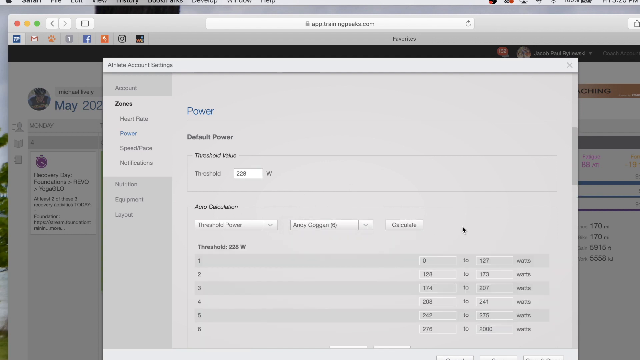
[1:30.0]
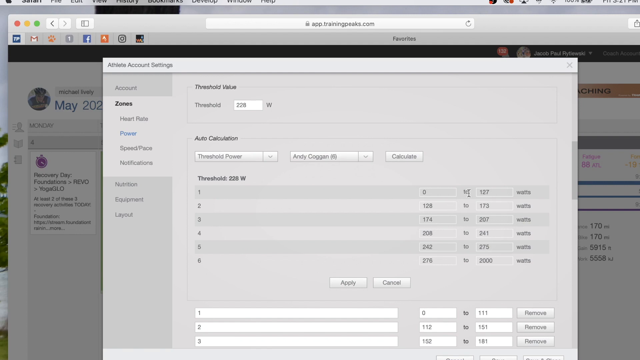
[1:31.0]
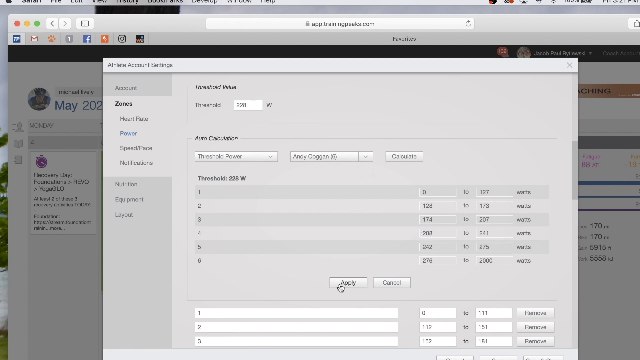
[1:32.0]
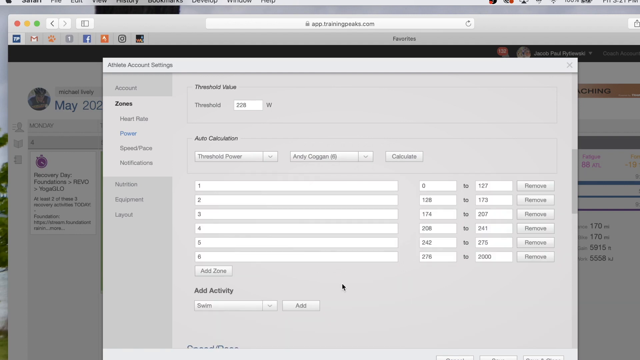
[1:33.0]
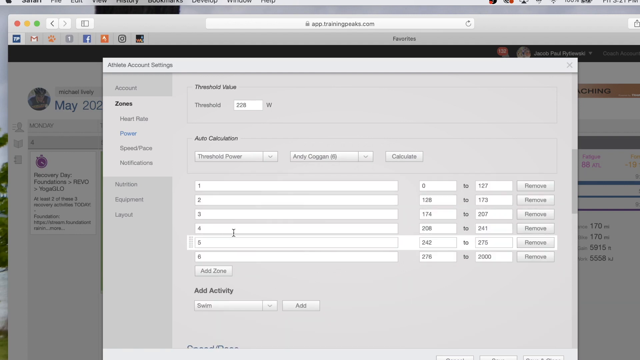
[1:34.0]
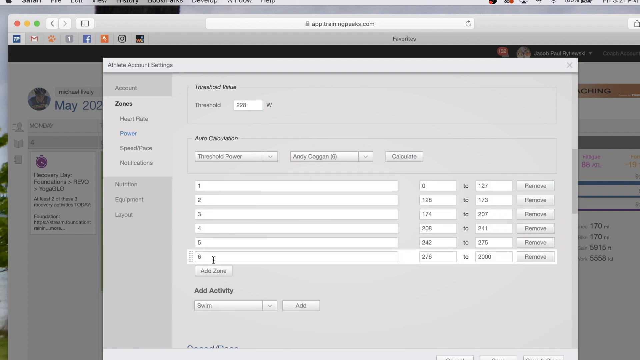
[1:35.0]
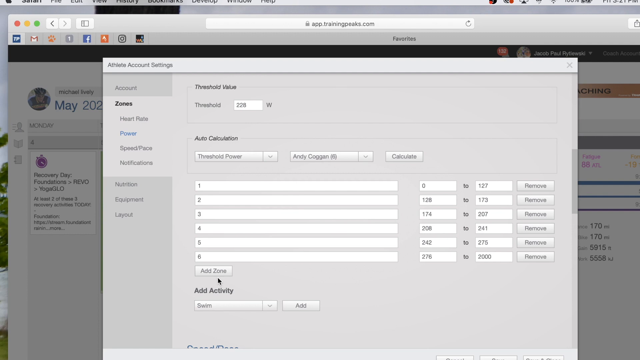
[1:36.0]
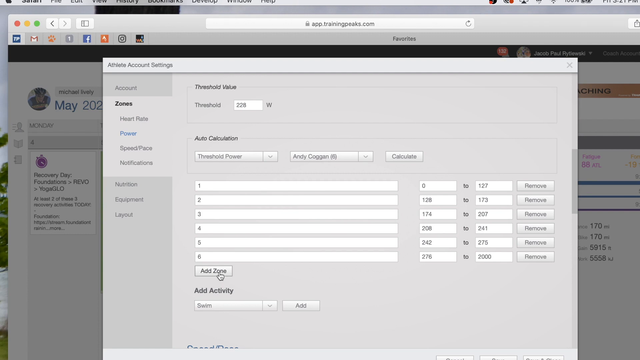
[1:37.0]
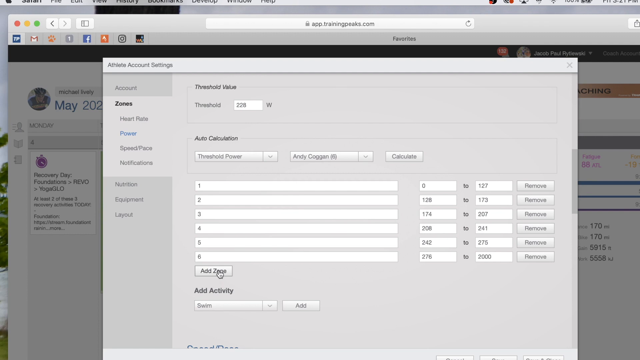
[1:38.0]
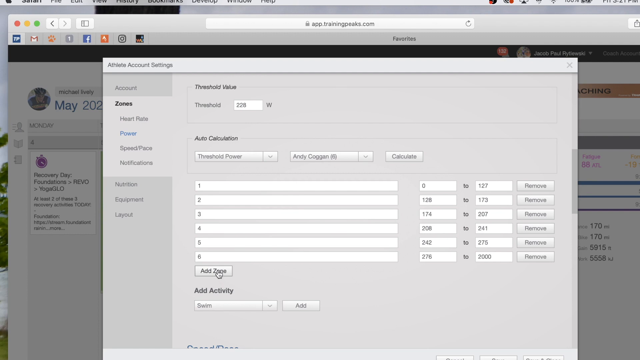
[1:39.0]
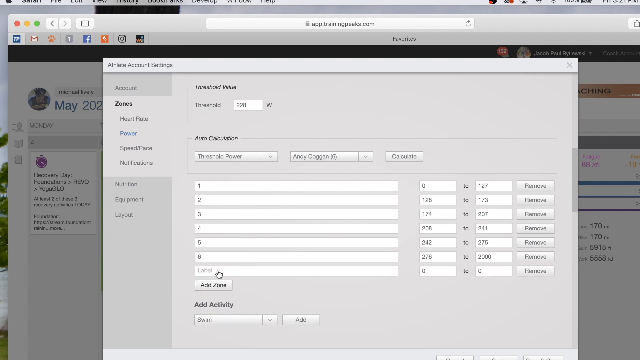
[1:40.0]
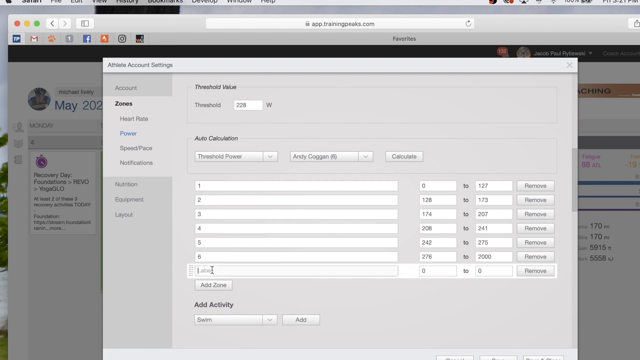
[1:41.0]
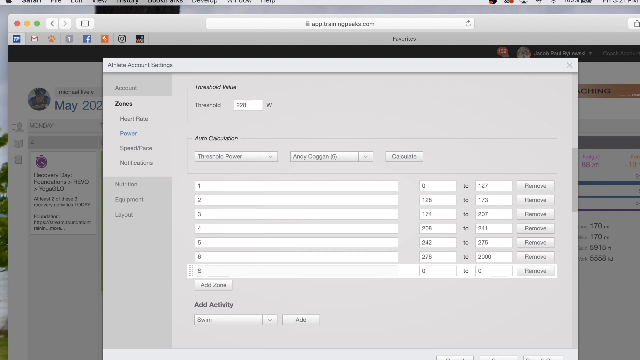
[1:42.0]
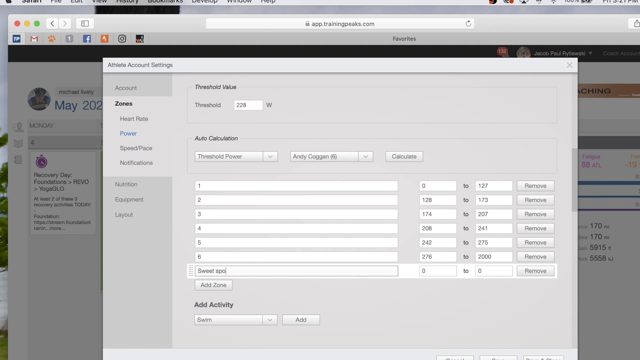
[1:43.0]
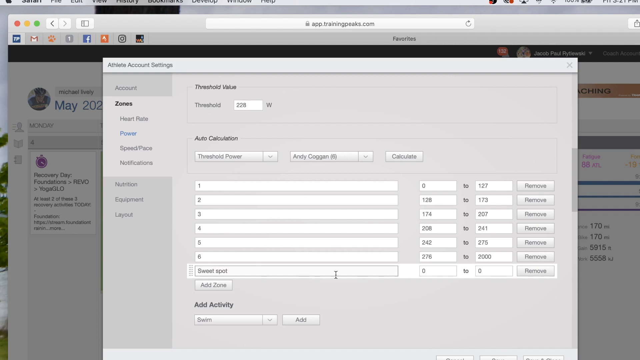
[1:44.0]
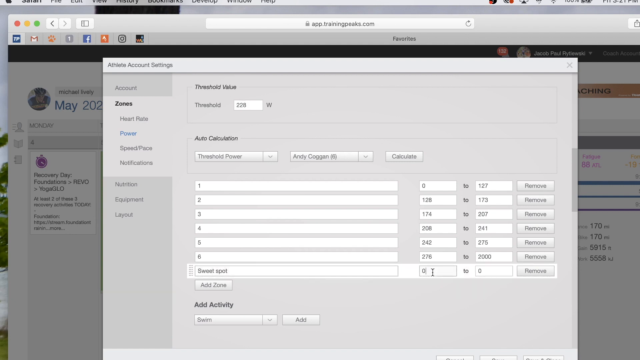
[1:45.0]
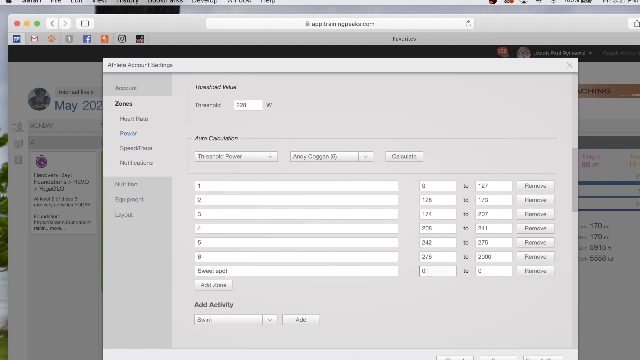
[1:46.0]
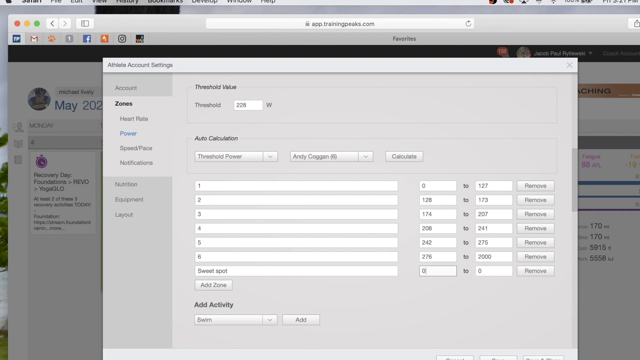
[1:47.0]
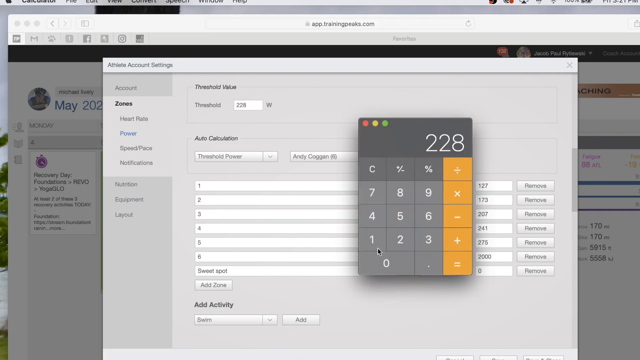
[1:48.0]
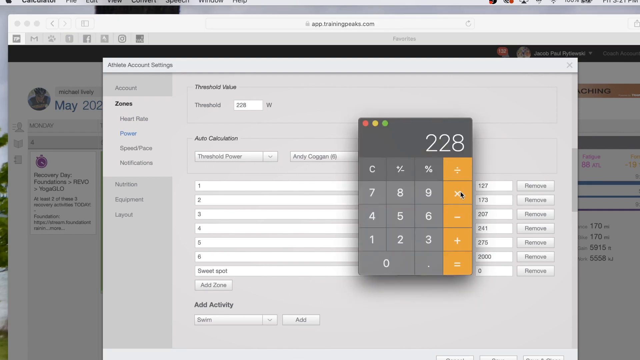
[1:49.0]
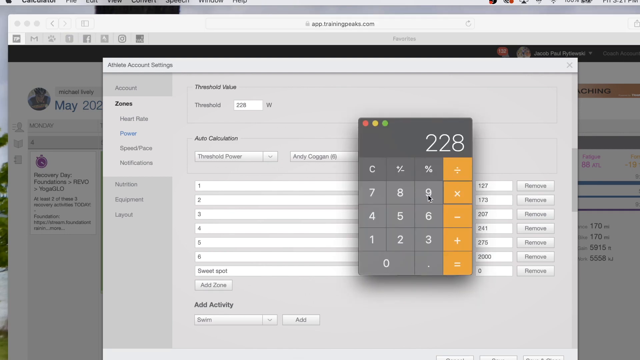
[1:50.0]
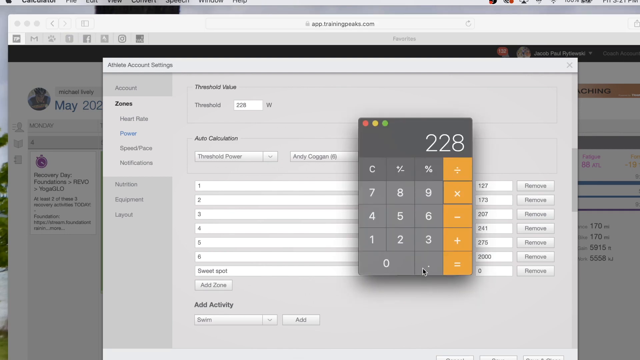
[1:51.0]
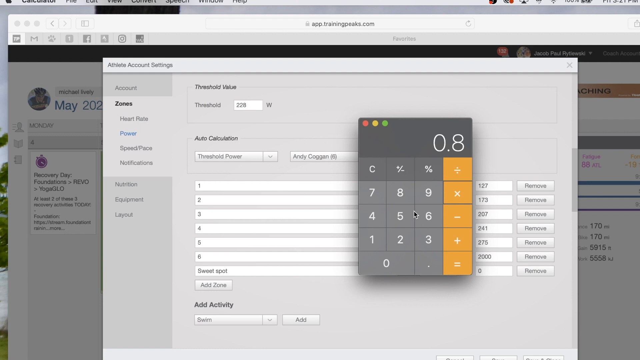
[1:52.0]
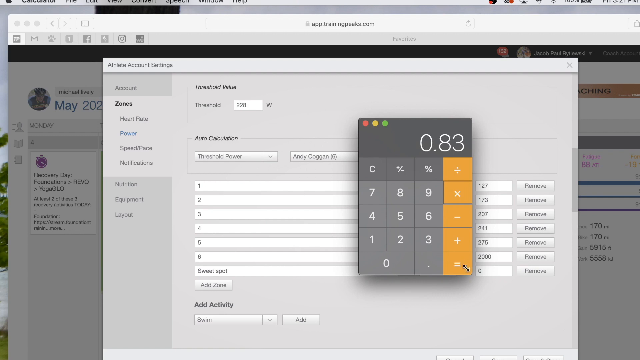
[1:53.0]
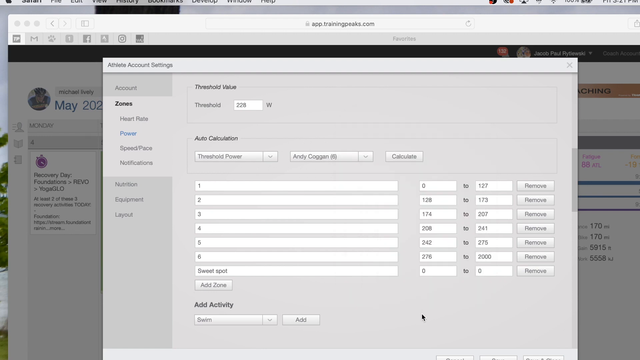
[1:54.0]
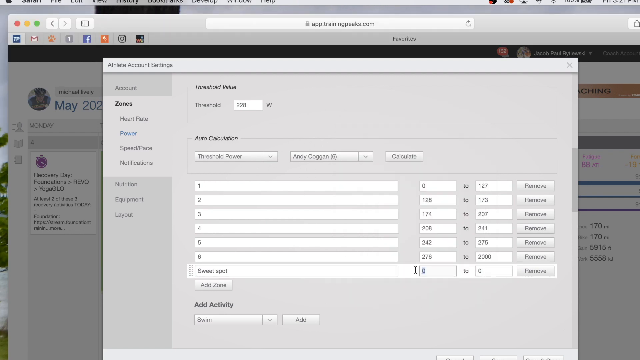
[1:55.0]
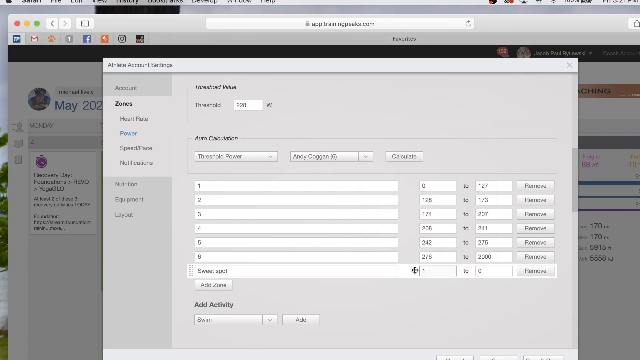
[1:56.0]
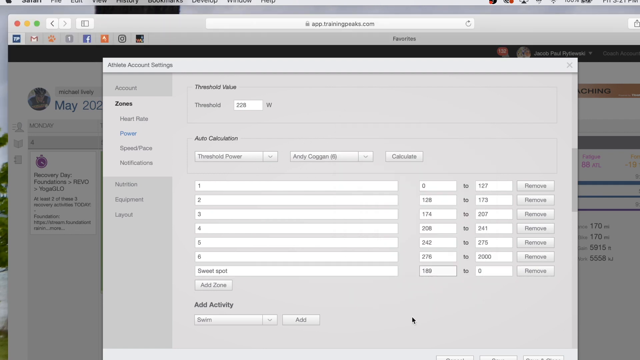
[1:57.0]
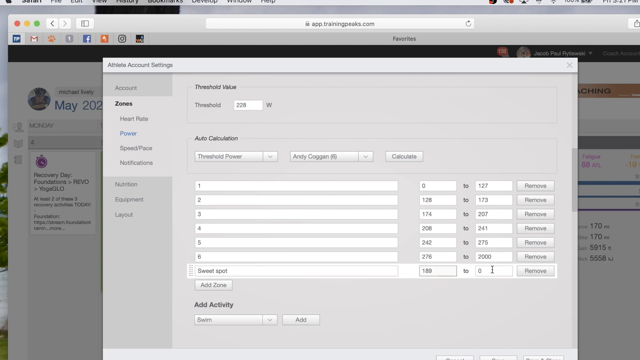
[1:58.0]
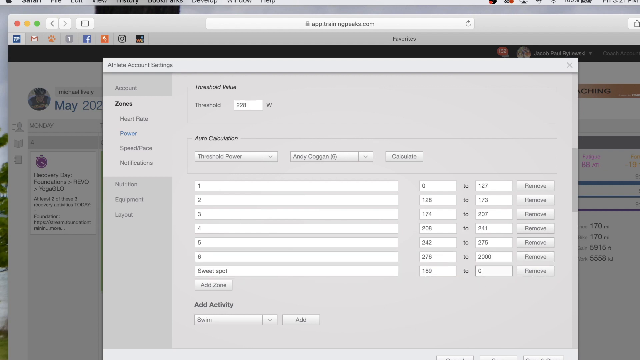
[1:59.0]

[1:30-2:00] The pop-up in the center still shows athlete account settings, with "account" down the left side and clickable links underneath it. To the right it says "power", with "default power" below it and options to click on to check the power. He scrolls down, points at a couple of items, and hits apply, which opens a different area with six sections going across halfway and a gray button below that says "add zone". The cursor moves up and down, down to the sixth section, then down to the add zone button and clicks it, which adds another entry, and he types in "Sweet spot". The view goes back to the calculator, which shows 228; he multiplies it by 0.83, giving 189.24. He puts this into the first box beside the zone he just added, but enters only 189. To the right of that it says "two", and there is another open spot to enter information. The last item is too blurry to make out.